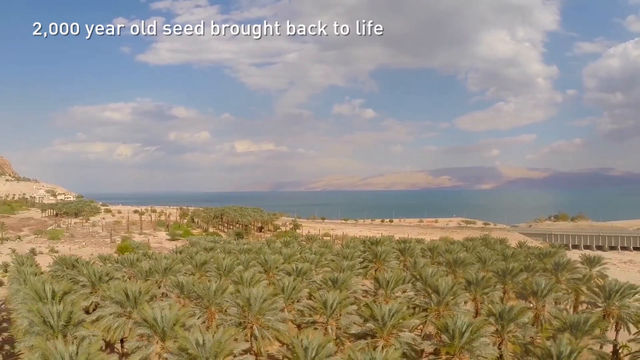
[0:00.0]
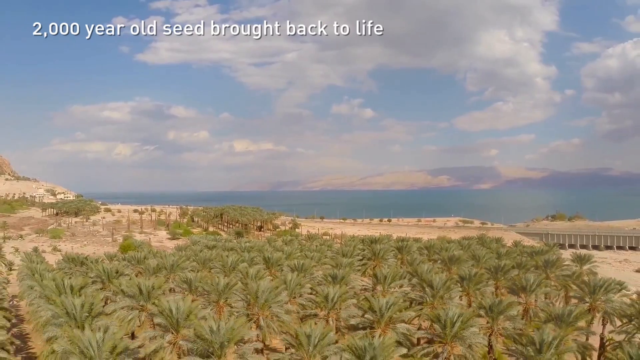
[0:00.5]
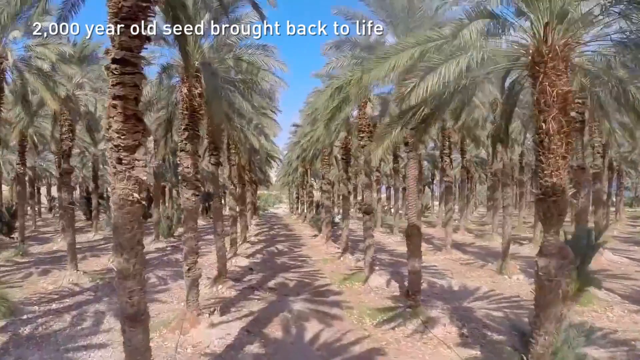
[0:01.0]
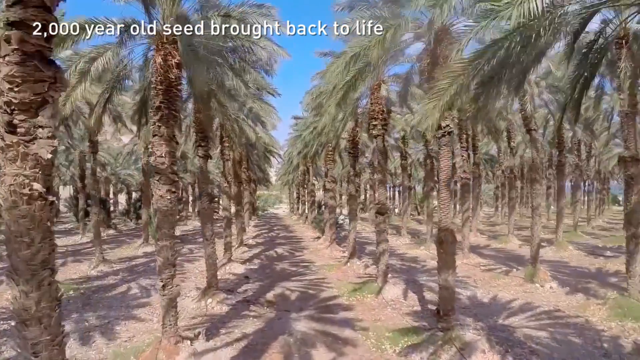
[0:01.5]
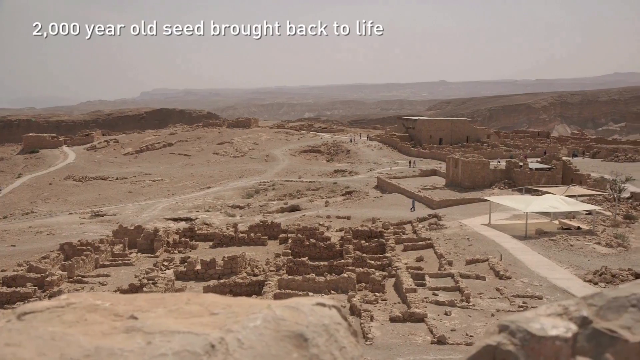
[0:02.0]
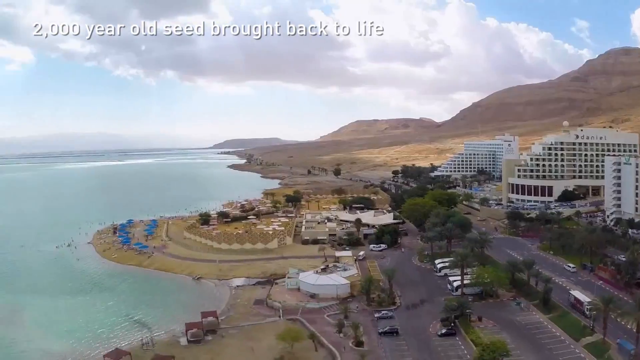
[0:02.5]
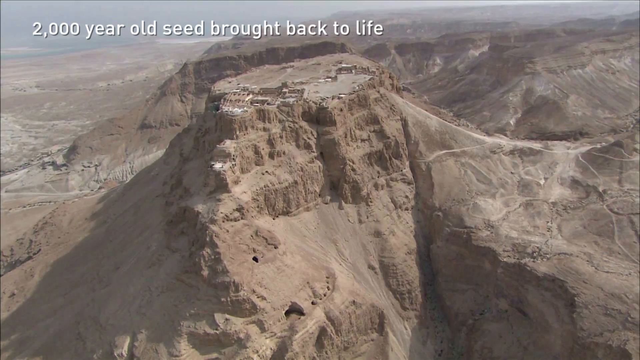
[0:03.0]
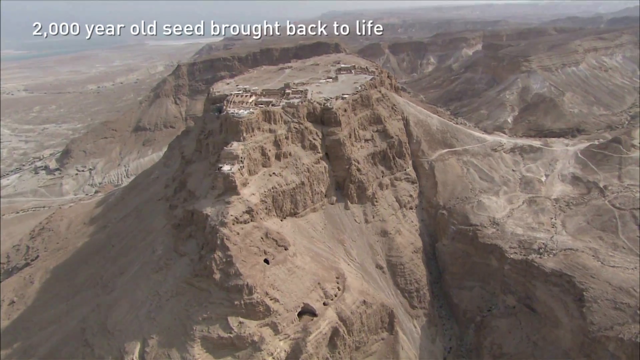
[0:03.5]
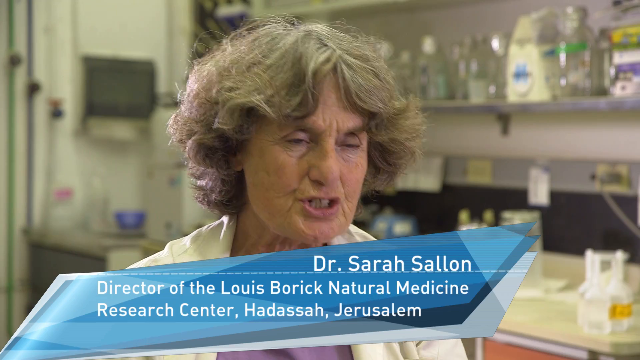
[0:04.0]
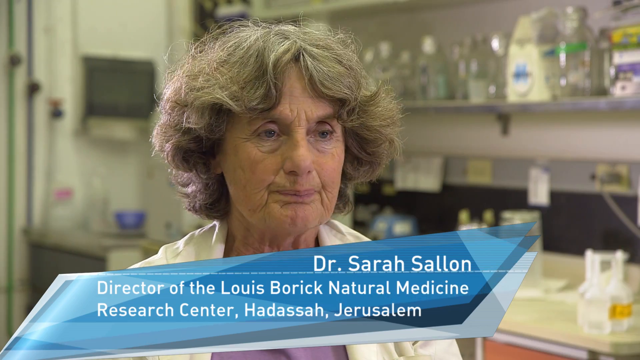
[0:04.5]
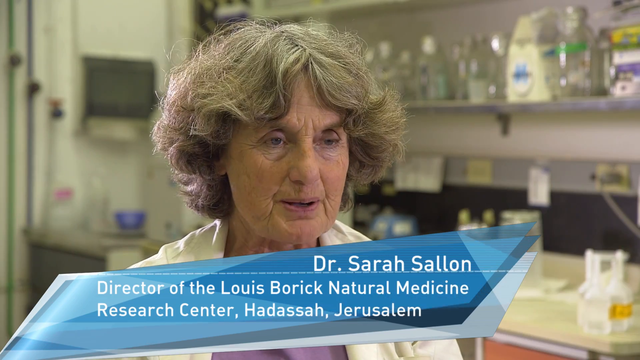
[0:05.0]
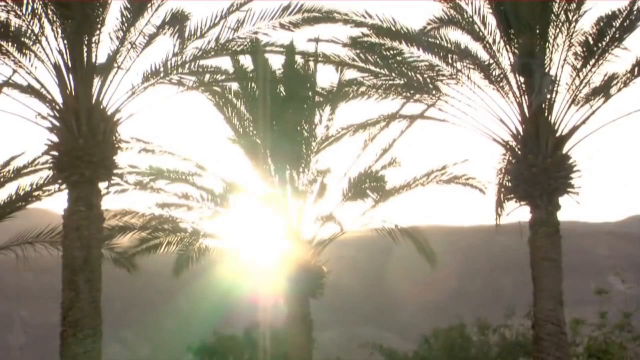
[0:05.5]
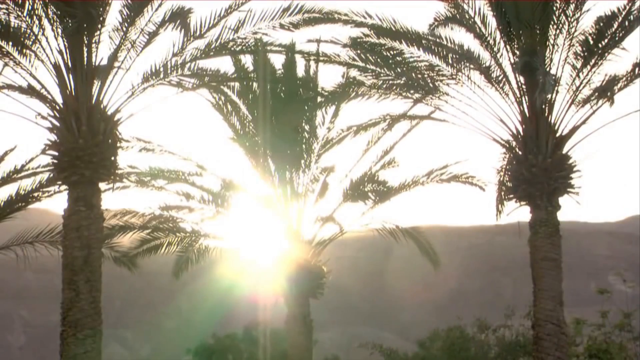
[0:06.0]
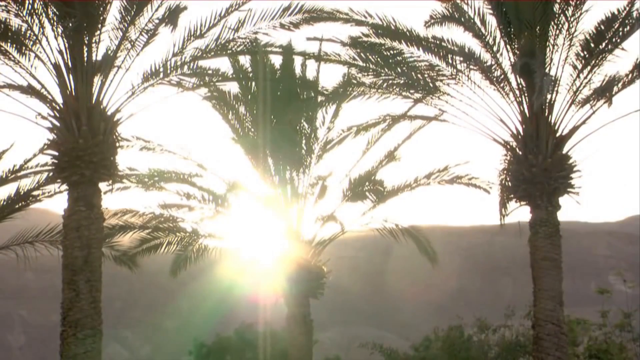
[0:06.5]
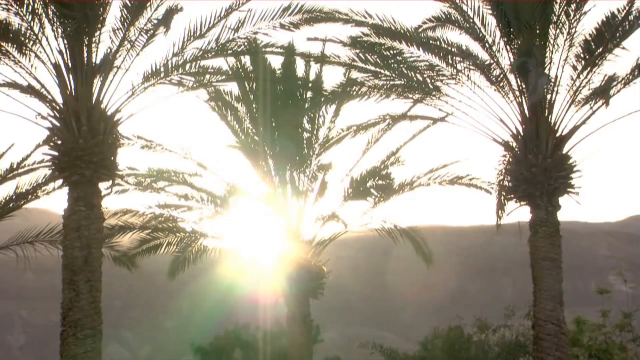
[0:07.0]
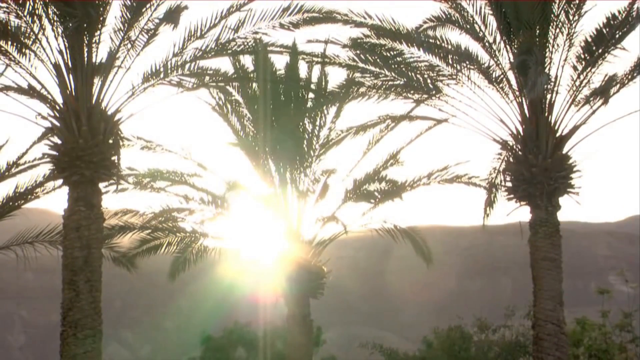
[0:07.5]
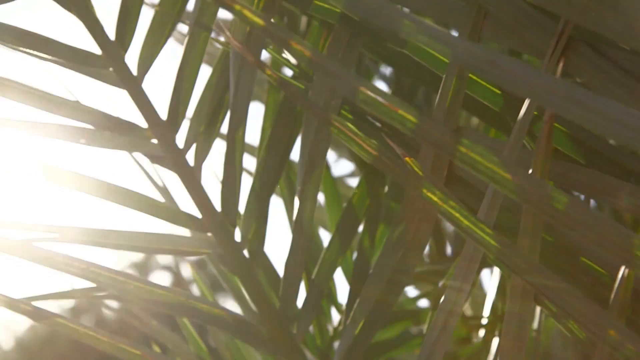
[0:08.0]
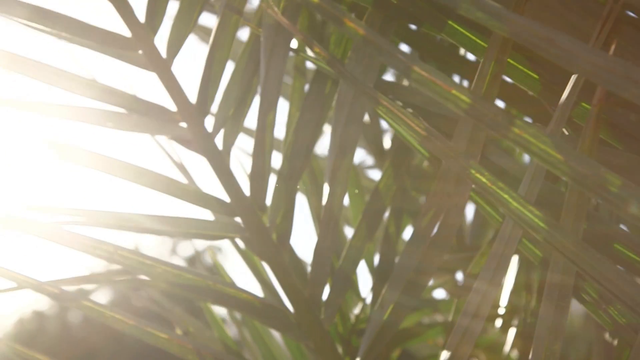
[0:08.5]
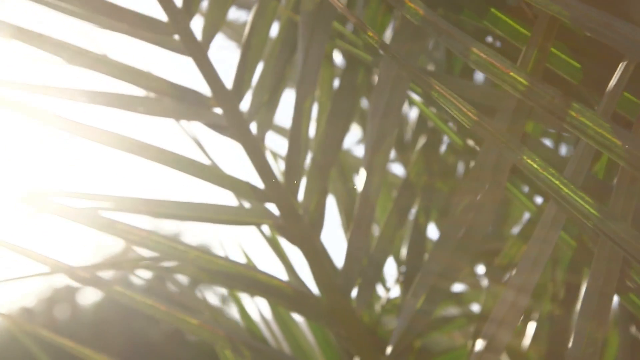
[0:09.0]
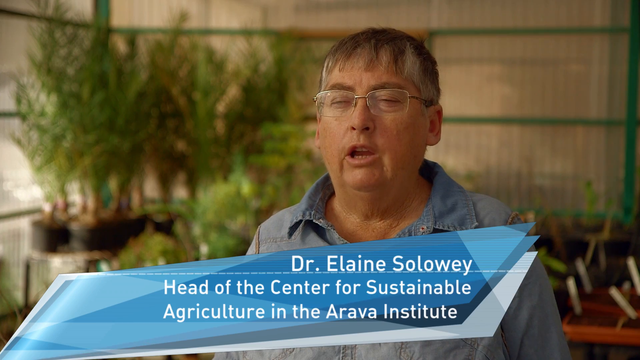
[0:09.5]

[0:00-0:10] The video appears to be about some kind of trees that look somewhat like palm trees or palm fronds and seem Mediterranean. It keeps shifting back and forth between a coastline, an open field with these trees in it, and two people talking about them: one is Dr. Sarah Sullen, and the other is a gentleman, apparently named Dr. Elaine Sorroway. Here and there it also shifts to a plateau and to a sunrise or sunset. The fields are open fields of some kind of tree.